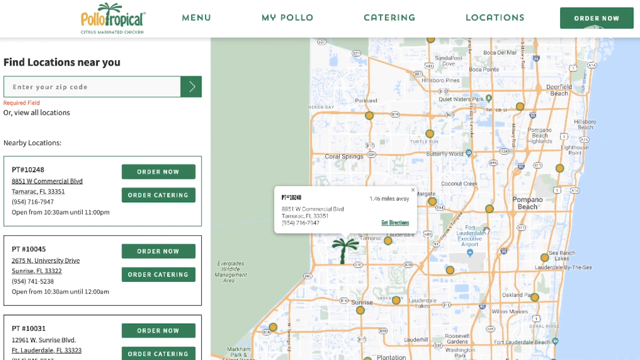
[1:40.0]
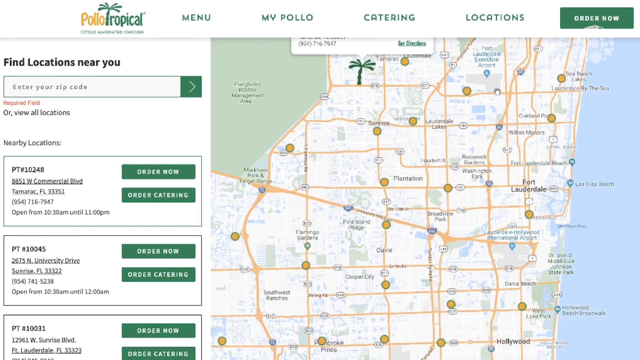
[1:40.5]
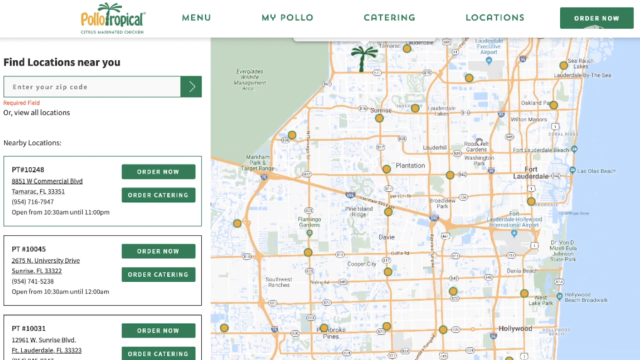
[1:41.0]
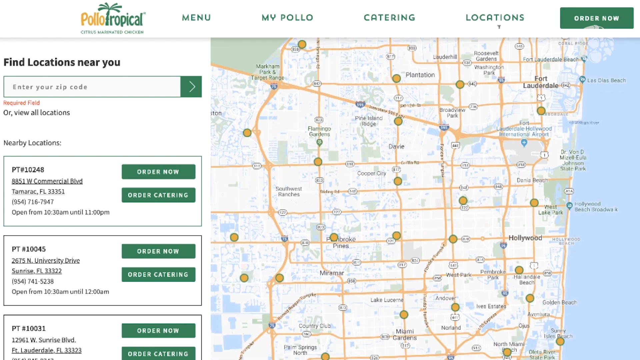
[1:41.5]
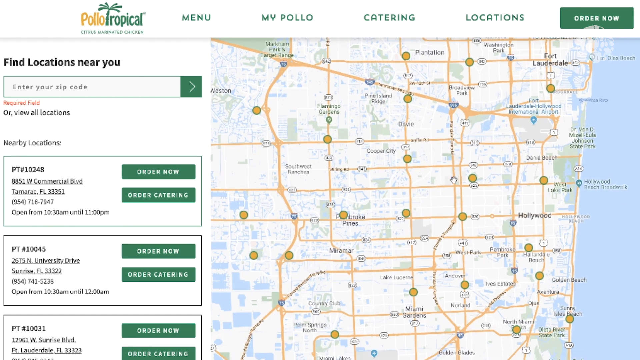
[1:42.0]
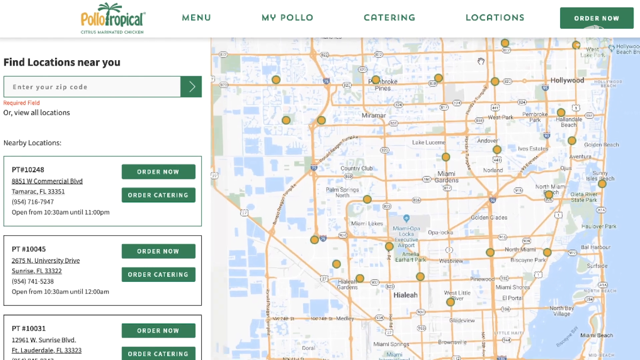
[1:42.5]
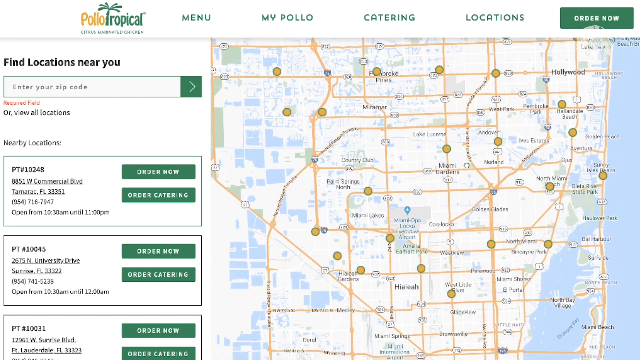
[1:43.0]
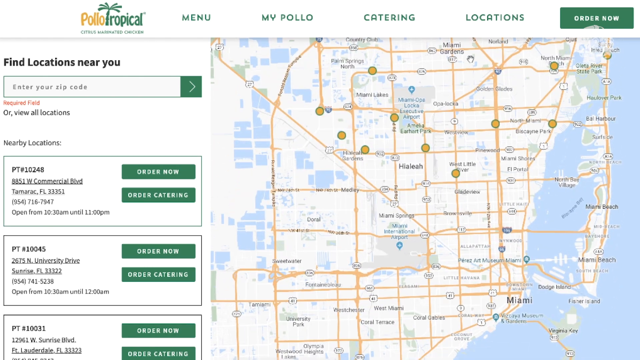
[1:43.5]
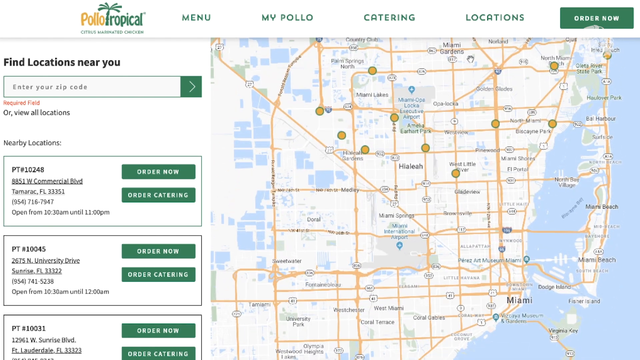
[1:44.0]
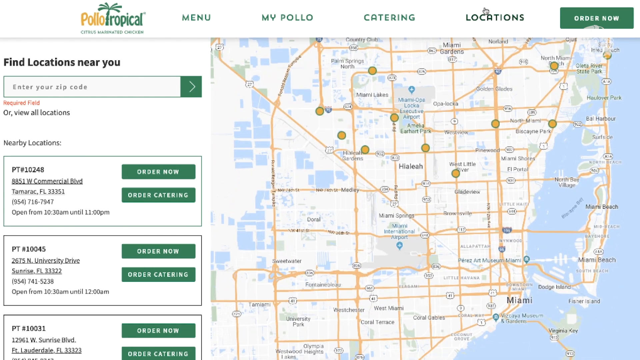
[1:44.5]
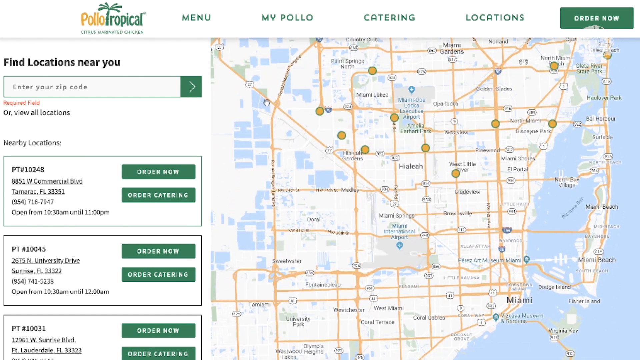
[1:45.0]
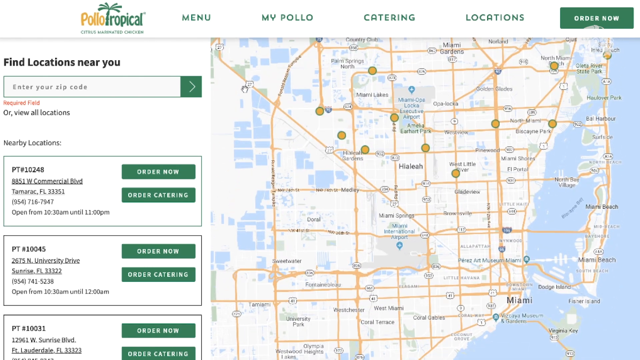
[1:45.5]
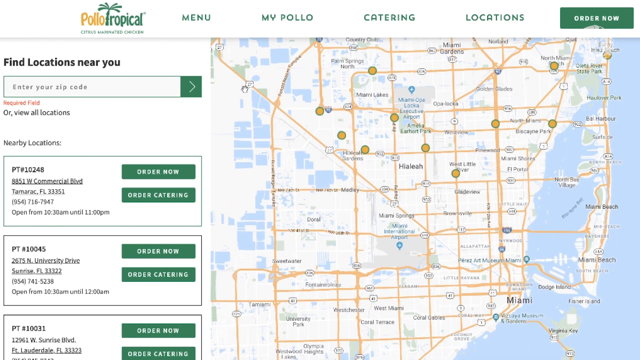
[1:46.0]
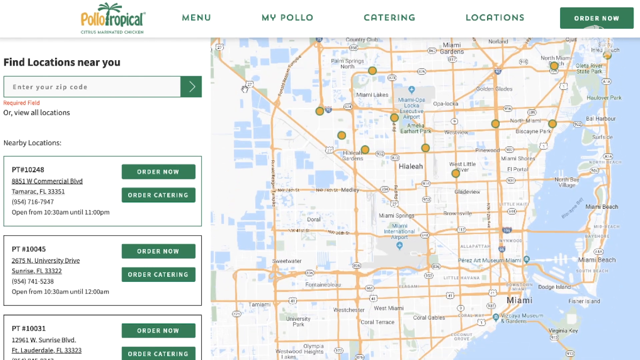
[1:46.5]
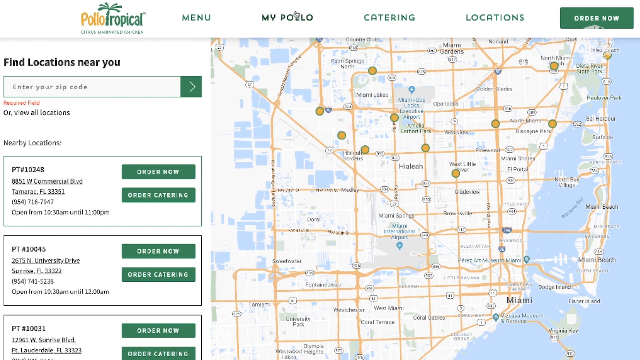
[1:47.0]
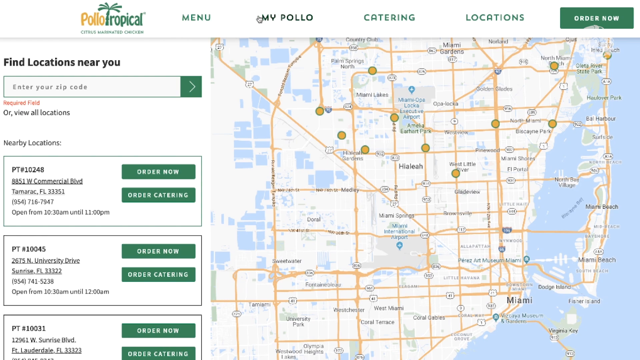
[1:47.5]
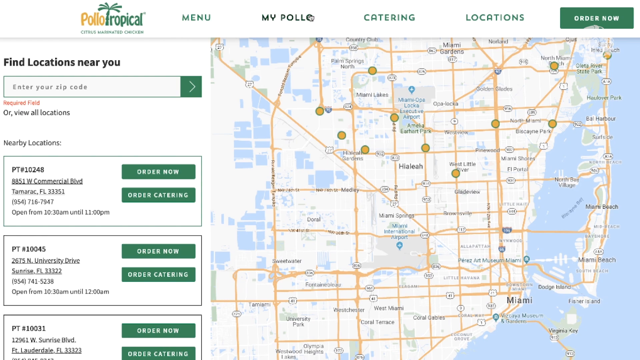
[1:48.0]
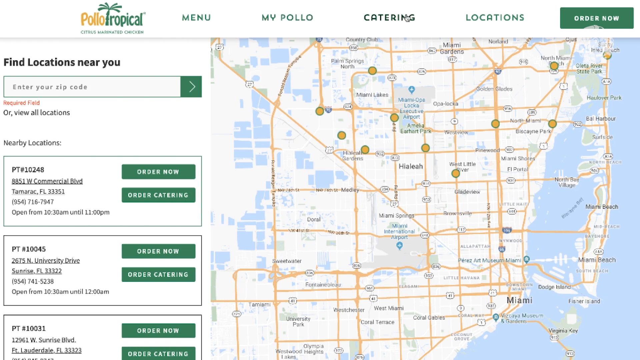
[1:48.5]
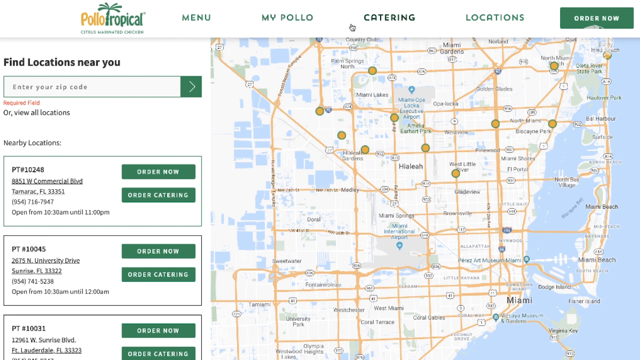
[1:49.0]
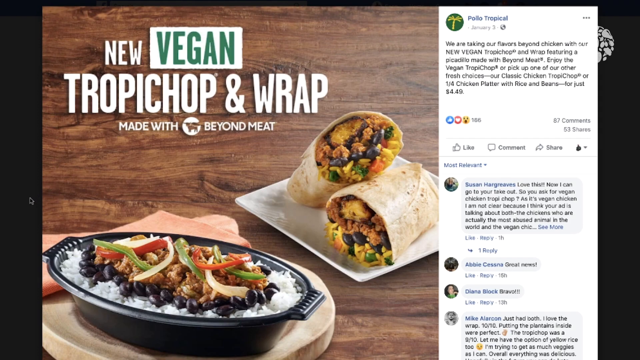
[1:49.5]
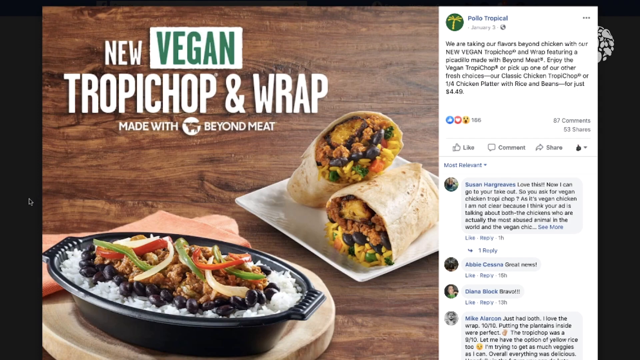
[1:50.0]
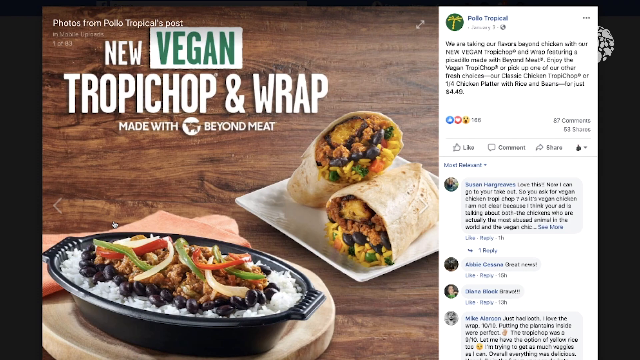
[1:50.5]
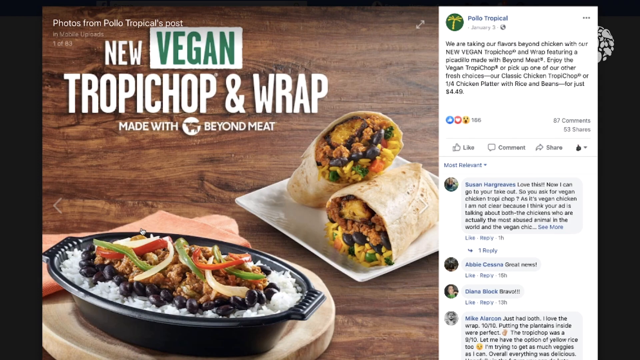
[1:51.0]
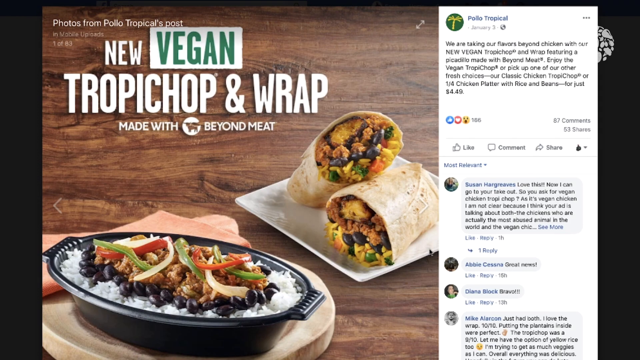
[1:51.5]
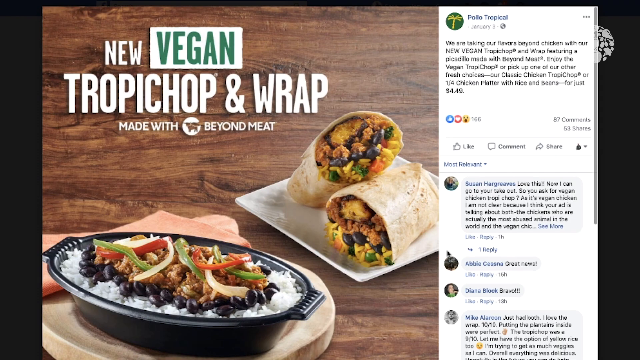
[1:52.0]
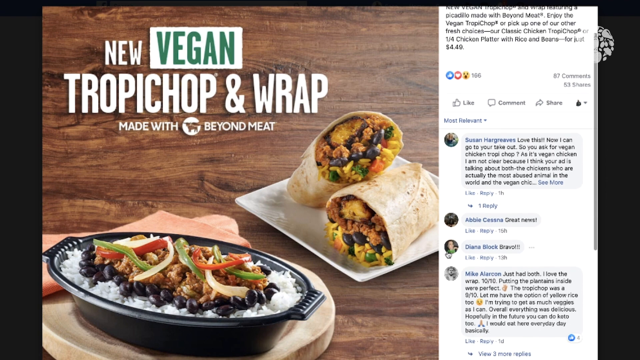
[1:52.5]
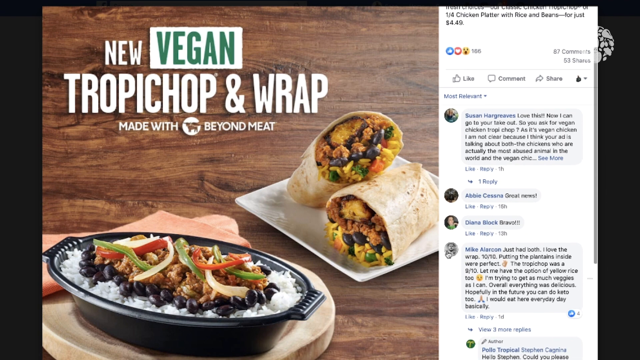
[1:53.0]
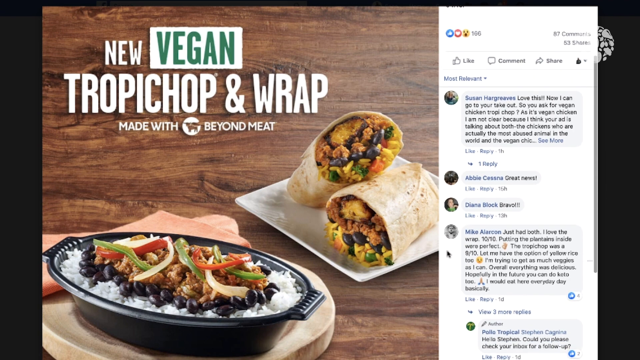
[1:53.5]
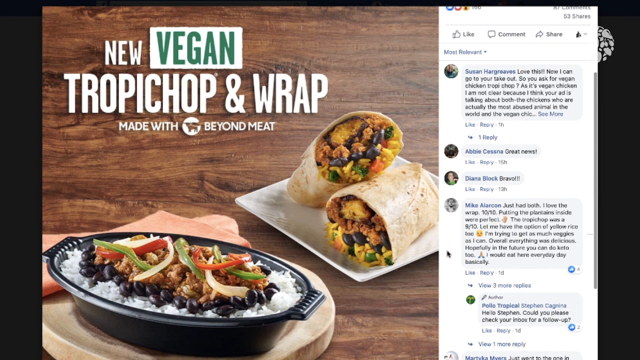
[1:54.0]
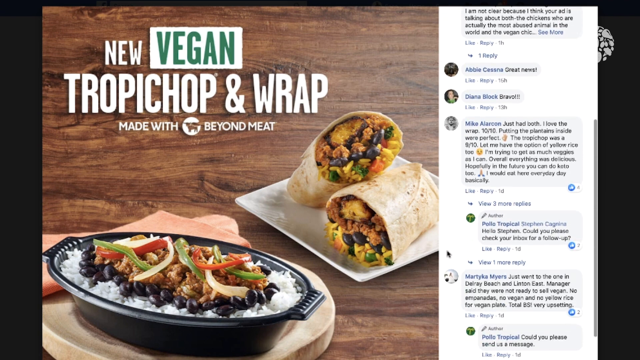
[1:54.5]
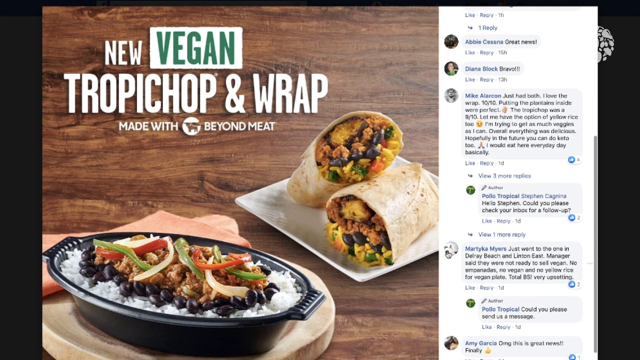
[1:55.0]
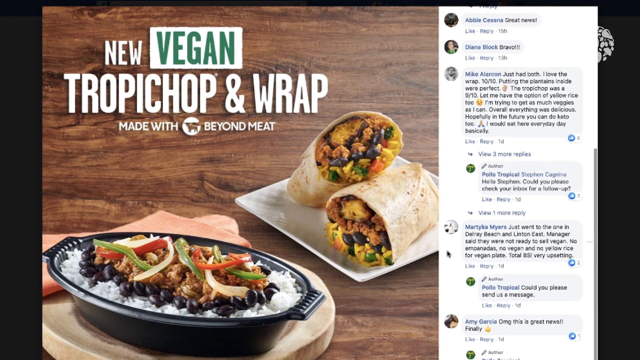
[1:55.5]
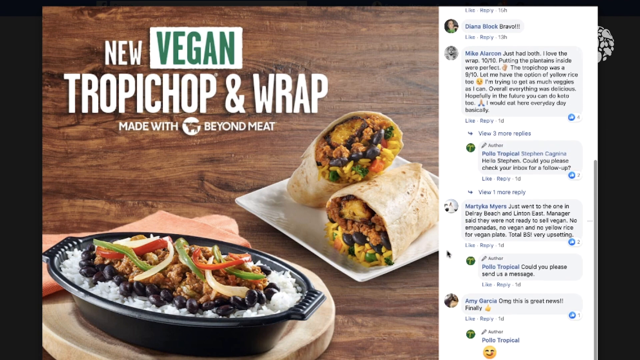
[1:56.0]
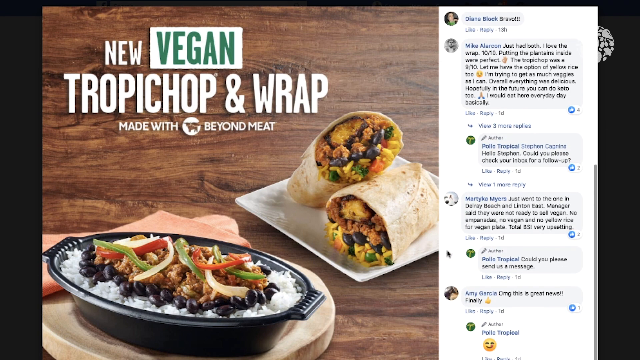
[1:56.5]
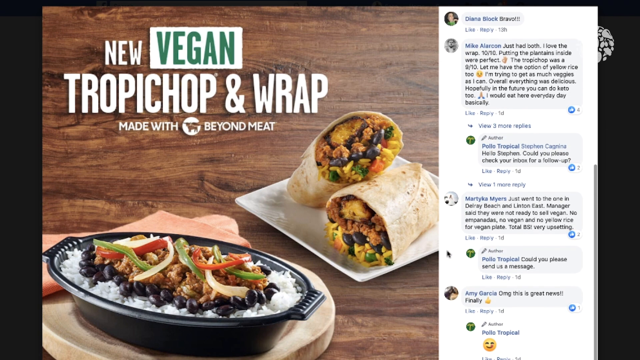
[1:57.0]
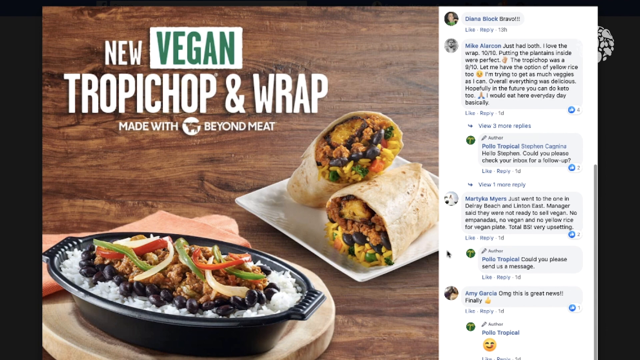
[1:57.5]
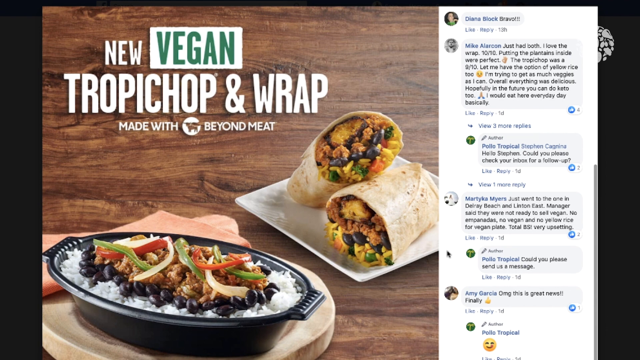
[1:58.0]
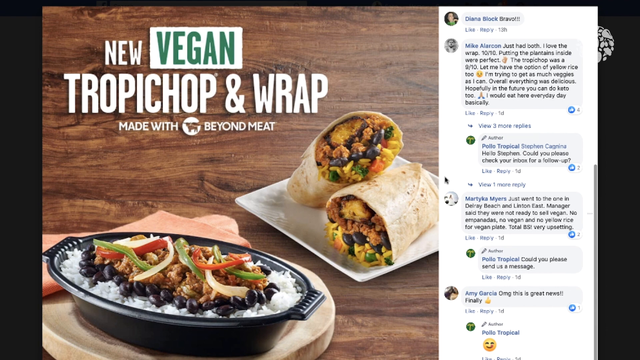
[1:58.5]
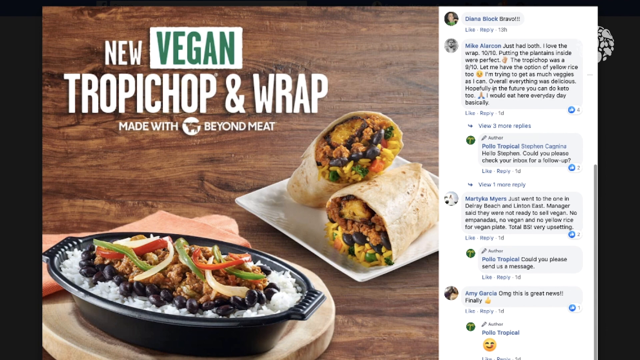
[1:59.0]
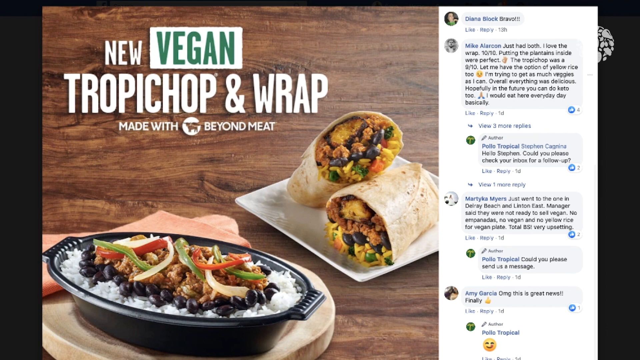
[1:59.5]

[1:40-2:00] A find-locations-near-you page has a search bar for entering a zip code, nearby locations, order now and order catering options, several locations and a map. The user shows the menu at the top, including catering and locations, and goes through the social media comments.